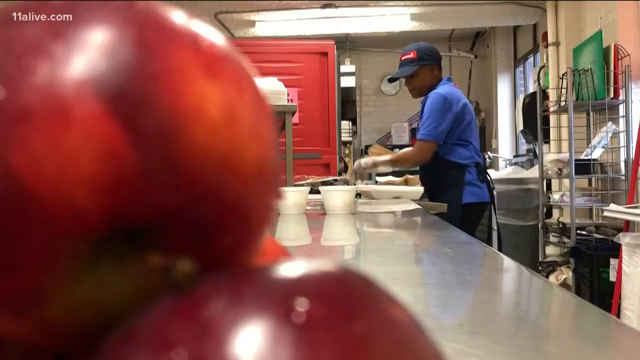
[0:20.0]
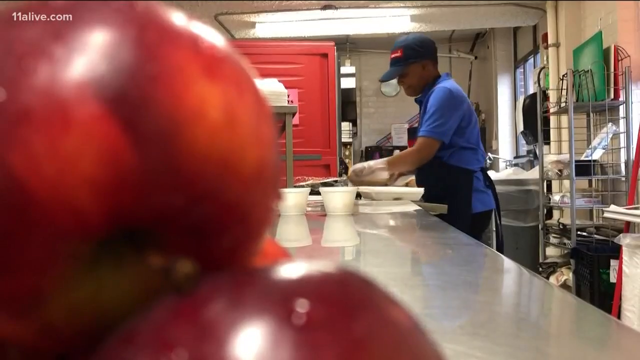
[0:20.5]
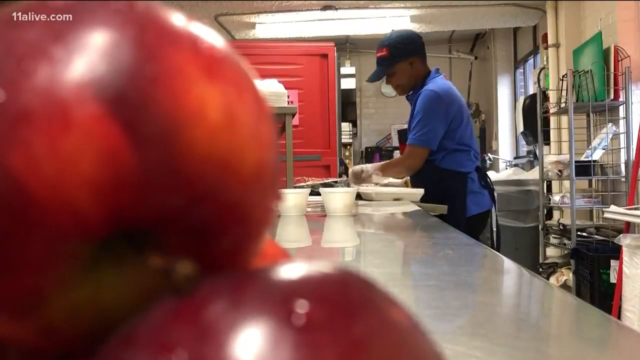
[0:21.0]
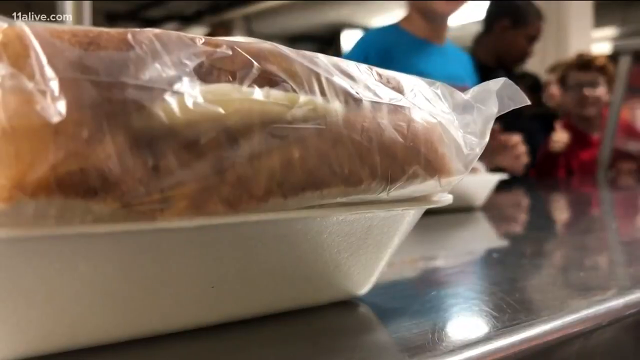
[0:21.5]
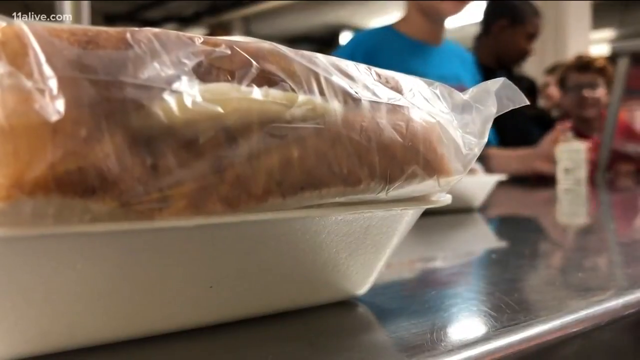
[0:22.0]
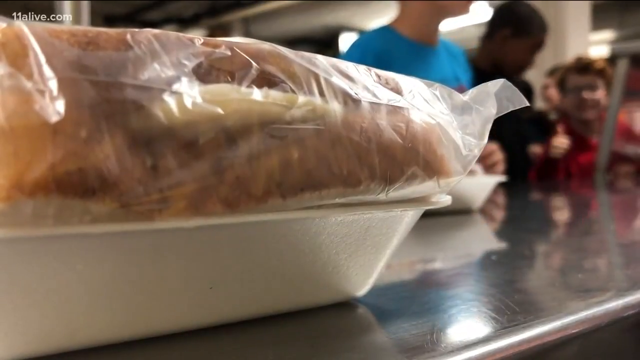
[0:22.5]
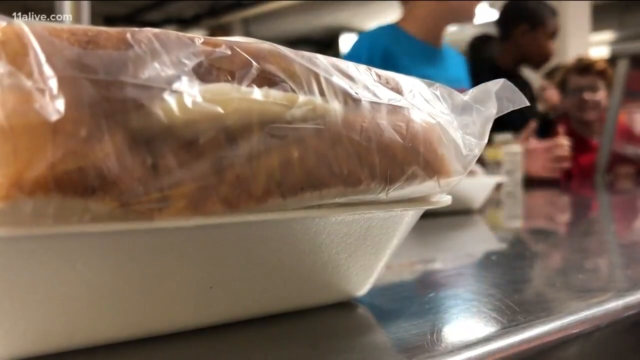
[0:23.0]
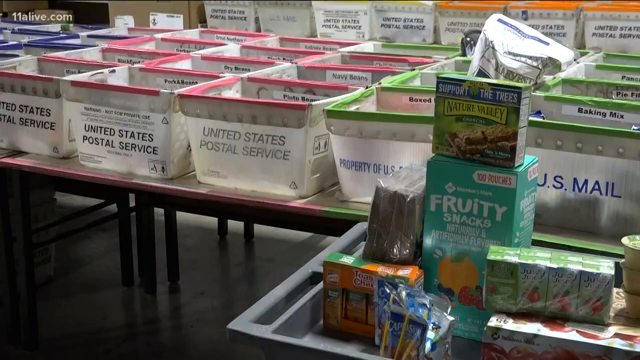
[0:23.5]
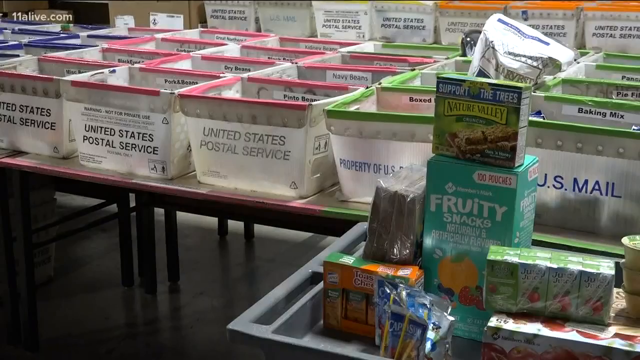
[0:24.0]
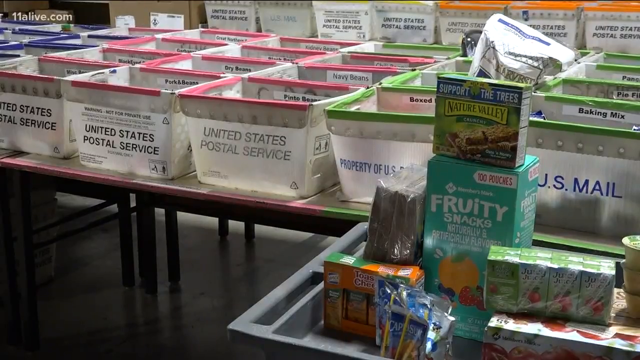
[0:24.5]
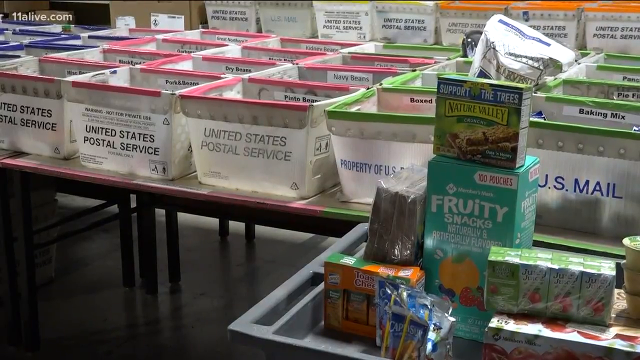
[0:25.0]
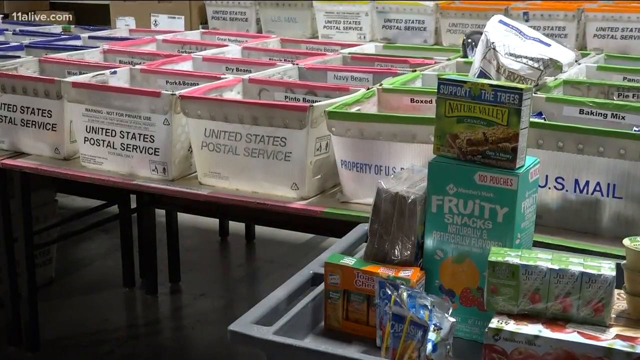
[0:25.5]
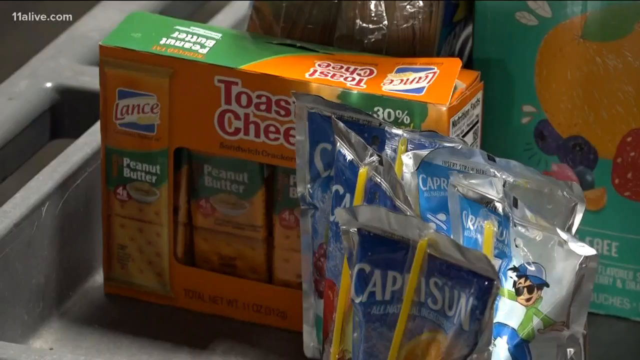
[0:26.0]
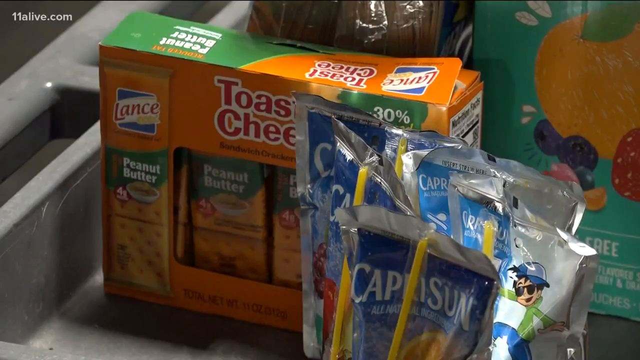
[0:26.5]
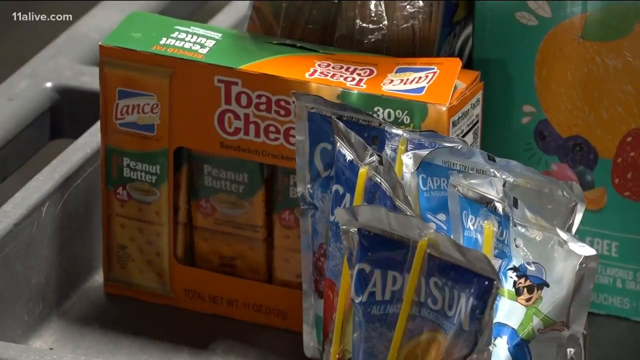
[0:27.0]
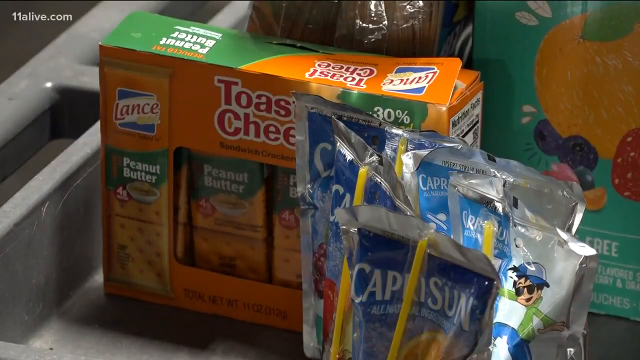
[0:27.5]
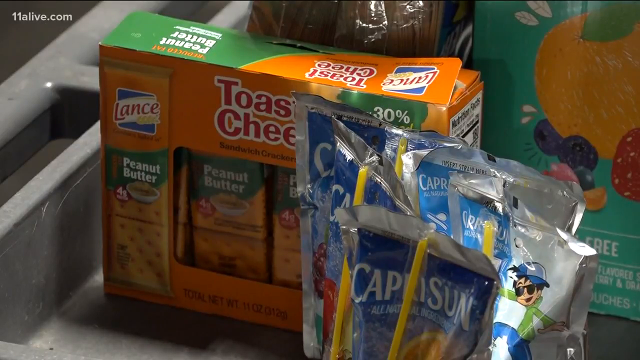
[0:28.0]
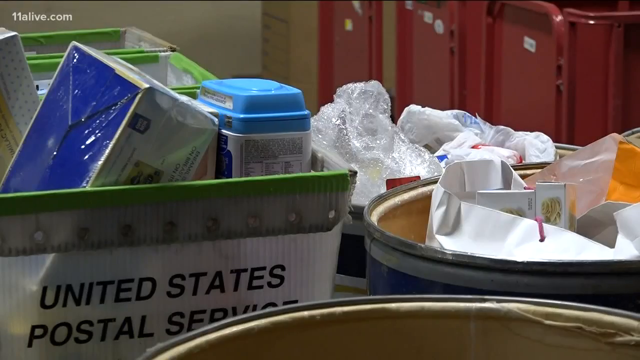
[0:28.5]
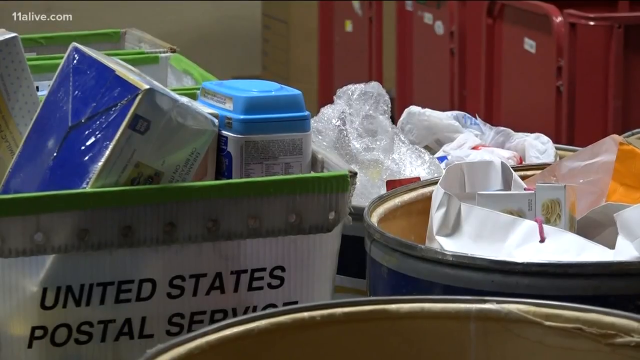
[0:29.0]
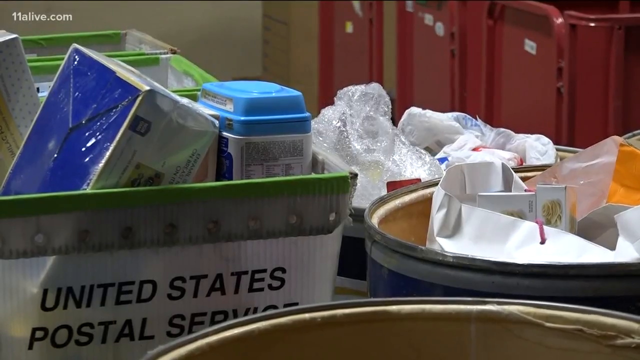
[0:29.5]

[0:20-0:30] A brochure for the Must summer lunch program is shown. Its text begins "while summer can mean sleeping in or planning your next getaway. Many of your neighbors are wondering how they will feed their" and goes on about free school lunches during the school year, the summer lunch program bringing the whole community together to help those in need with compassion, and Must providing a nutrition-based lunch that is about good food, not just food. It states "The generosity of our communities make it possible." The message is signed "love" followed by a name that appears to be Tanya or possibly Tara.